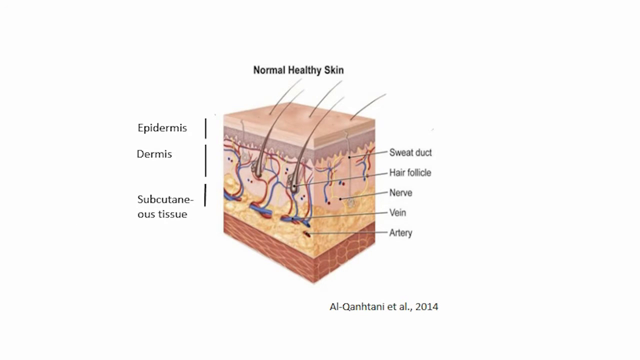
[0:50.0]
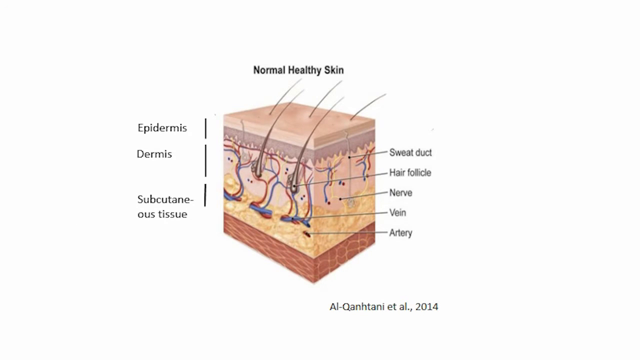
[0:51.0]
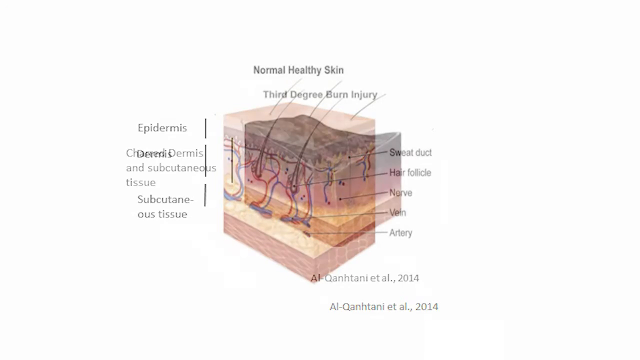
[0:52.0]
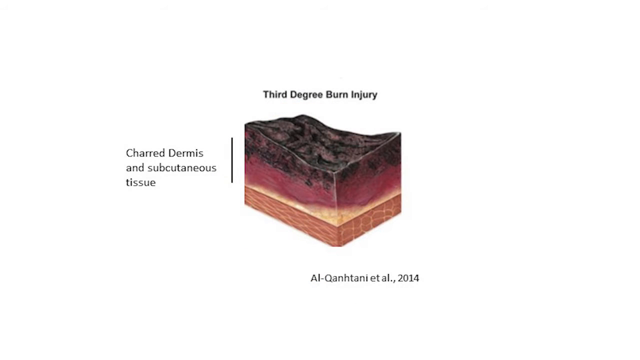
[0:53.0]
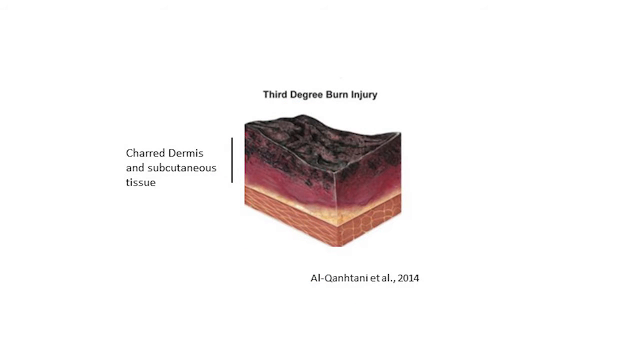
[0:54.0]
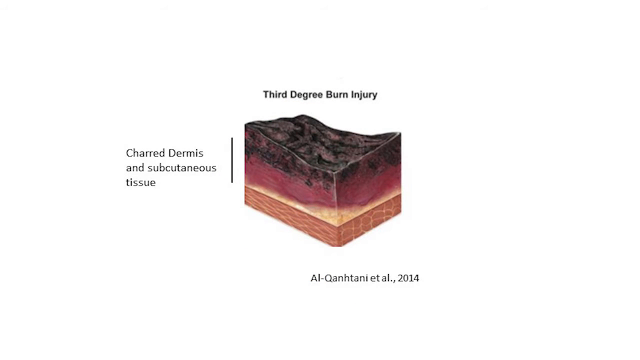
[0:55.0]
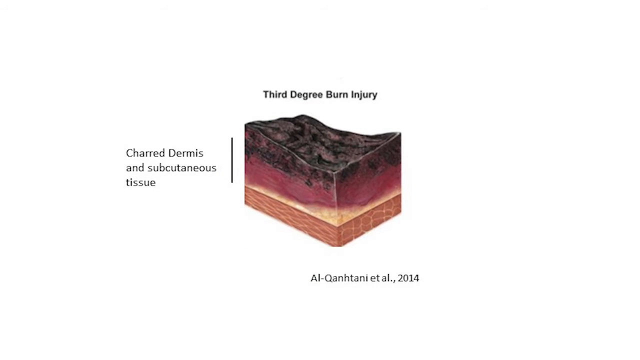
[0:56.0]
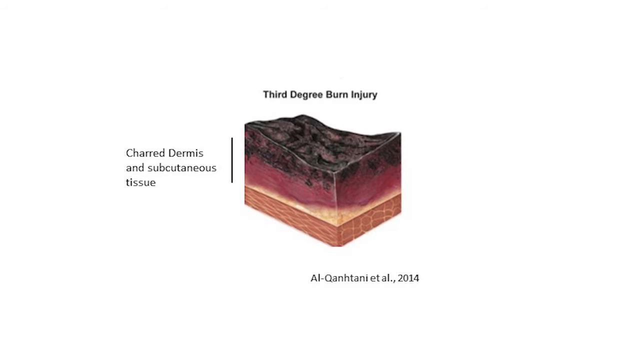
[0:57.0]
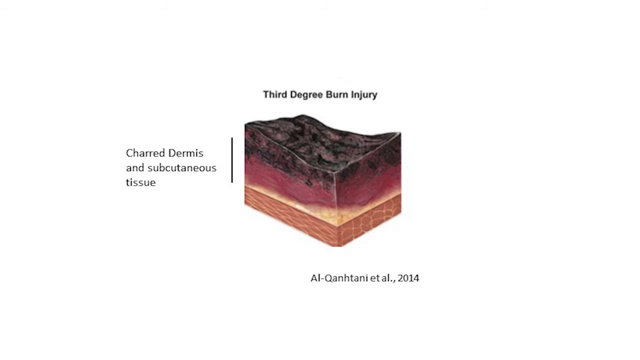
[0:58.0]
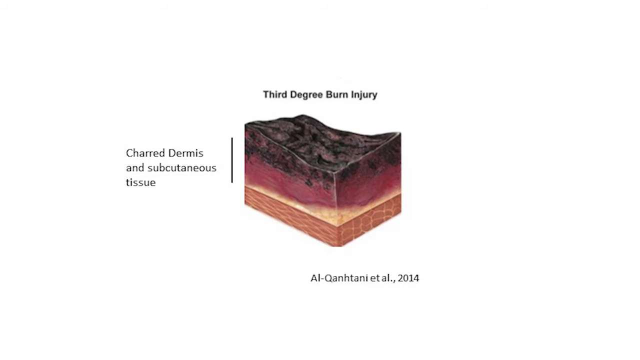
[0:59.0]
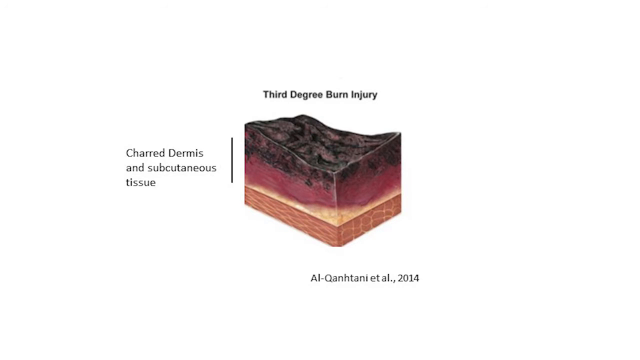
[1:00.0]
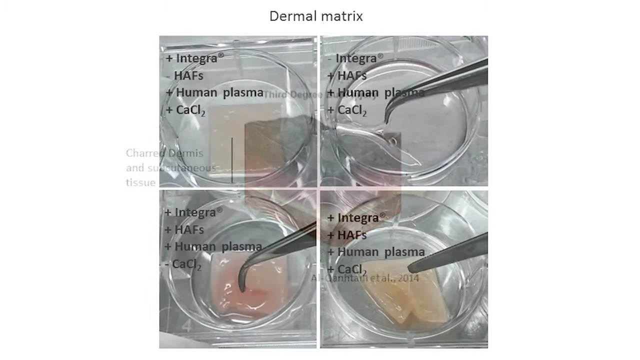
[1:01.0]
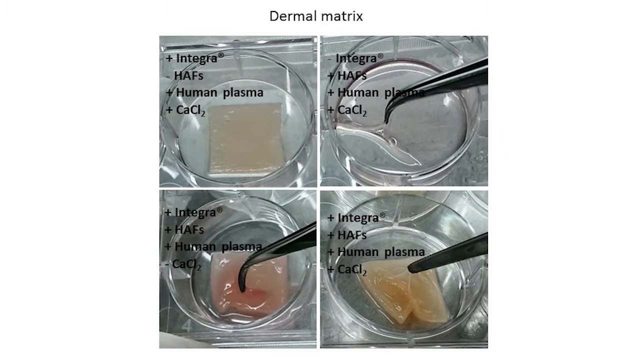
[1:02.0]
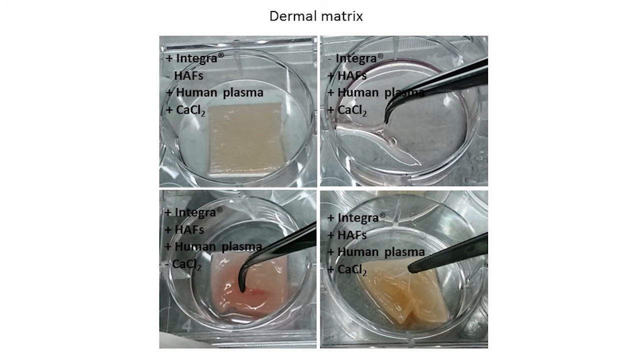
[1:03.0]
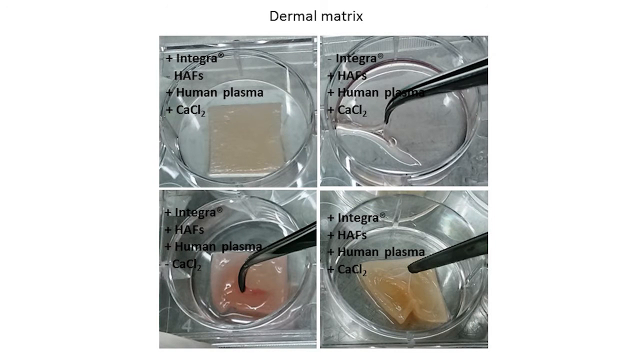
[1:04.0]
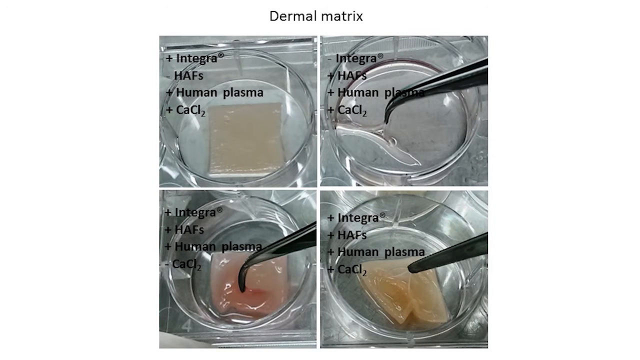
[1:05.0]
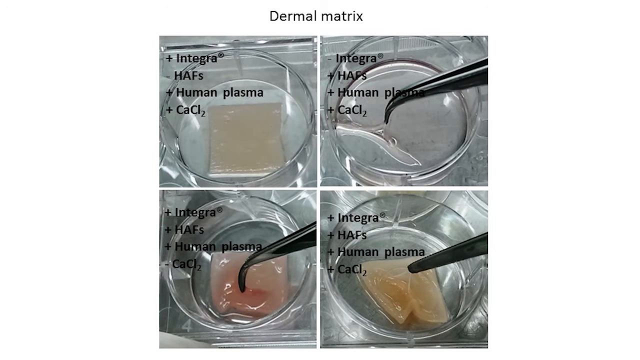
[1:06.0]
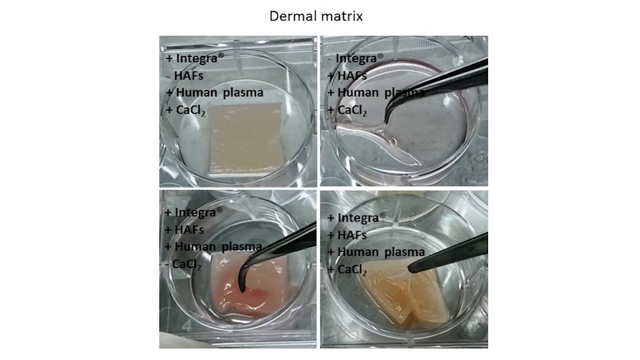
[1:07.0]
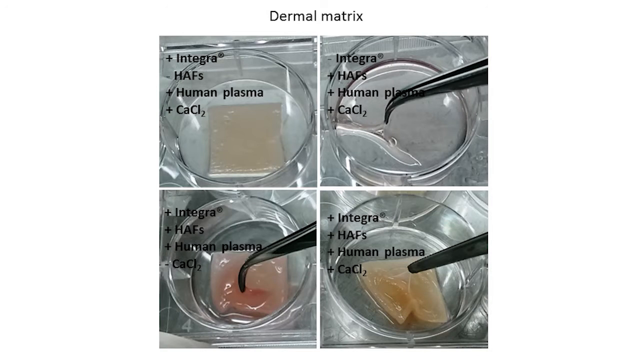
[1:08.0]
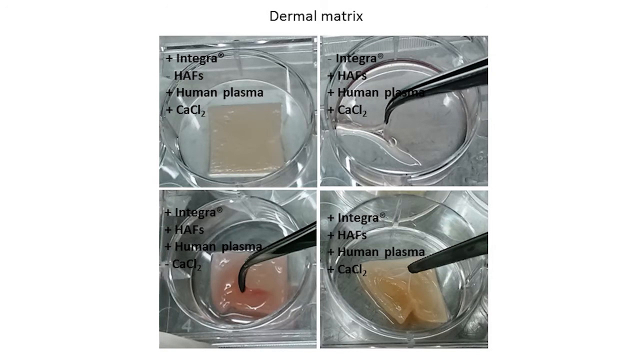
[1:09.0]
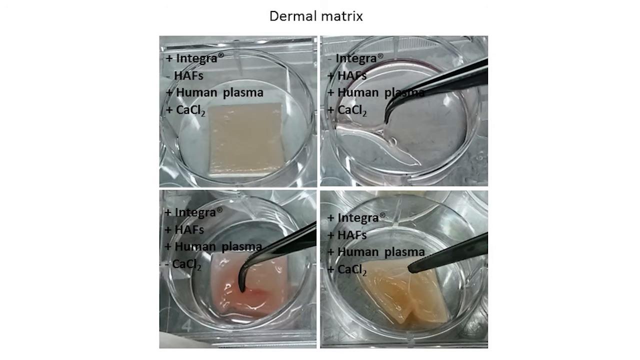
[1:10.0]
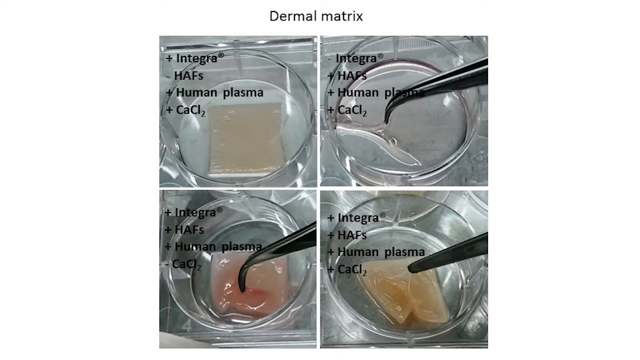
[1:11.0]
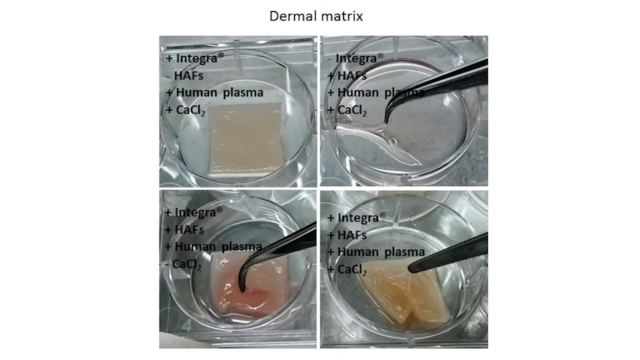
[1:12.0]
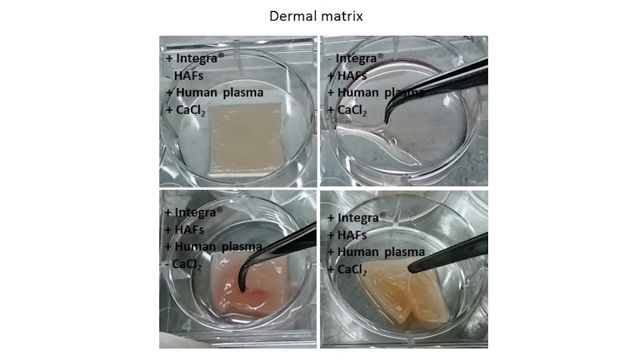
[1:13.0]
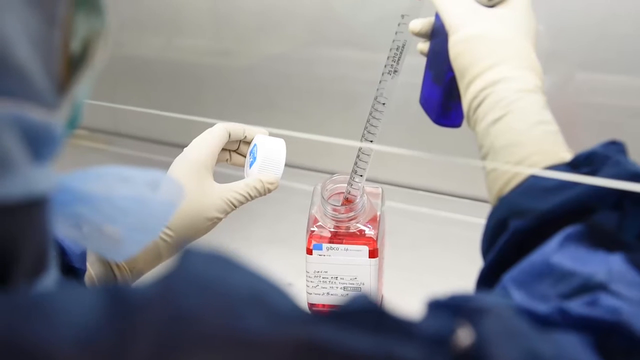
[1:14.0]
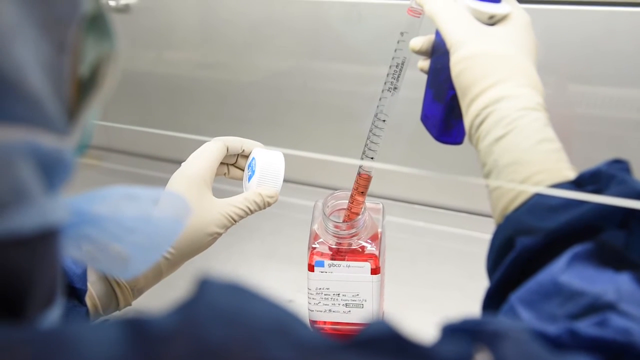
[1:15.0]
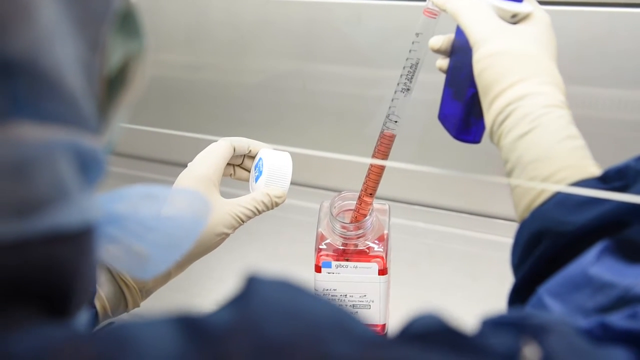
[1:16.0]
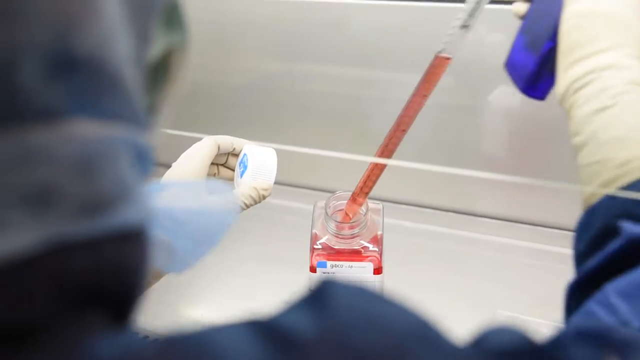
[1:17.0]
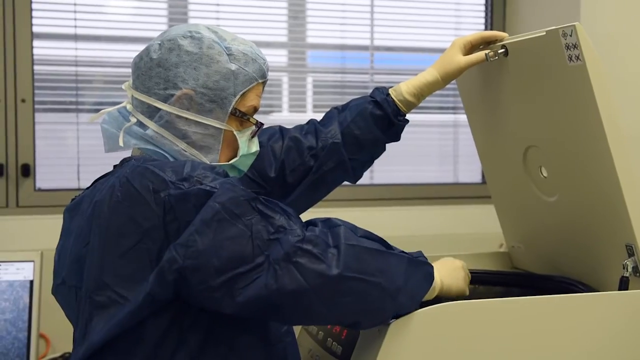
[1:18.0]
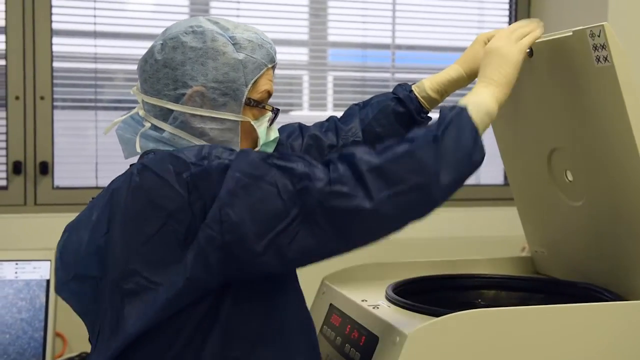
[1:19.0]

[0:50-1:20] A three-dimensional diagram drawn on a white background shows normal healthy skin, with the epidermis at the top, the dermis in the middle and the subcutaneous tissue lower down. As it moves, hairs come out of the skin, about five of them. The diagram then shows a third degree burn injury, with the charred dermis and subcutaneous tissue. The video cuts to a page with petri jars, with "integra, HAFs, human plasma, plus CaCl2" on the top left. It then cuts to someone drawing pinkish fluid up into a plastic measuring squirter. A picture then shows four areas with the dermal matrix; in some of them tweezers come in: the top left one has no tweezers, while the upper right, lower left and lower right ones do.